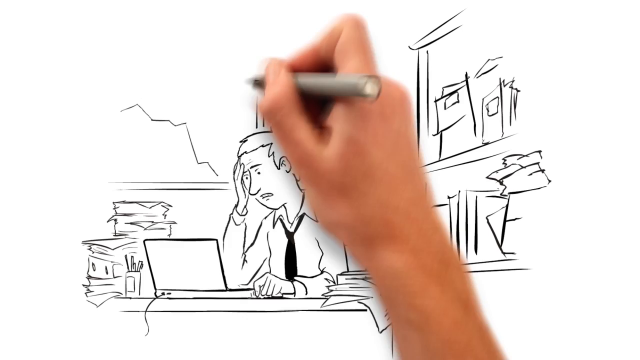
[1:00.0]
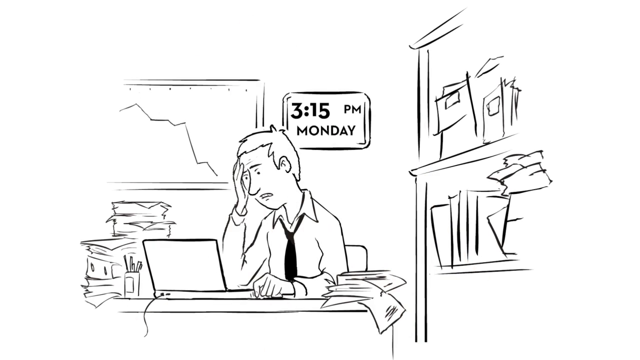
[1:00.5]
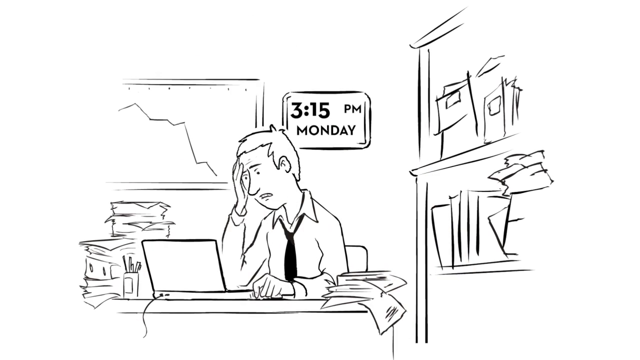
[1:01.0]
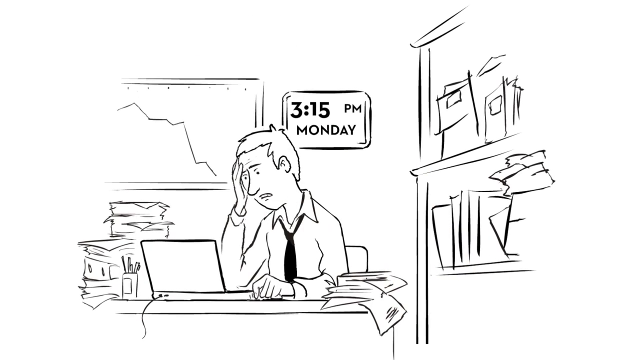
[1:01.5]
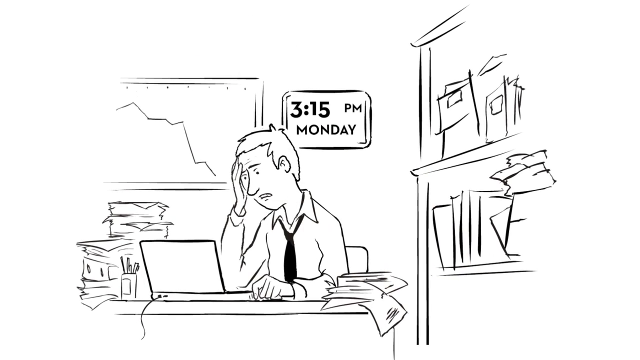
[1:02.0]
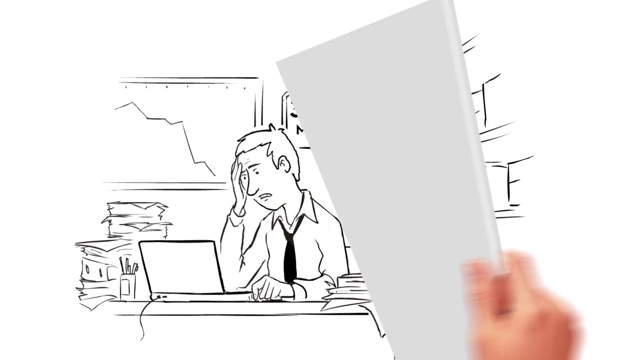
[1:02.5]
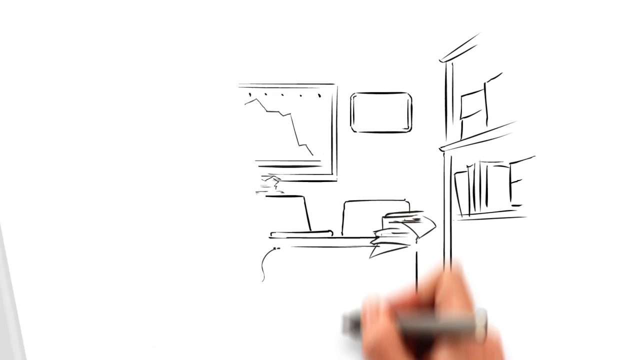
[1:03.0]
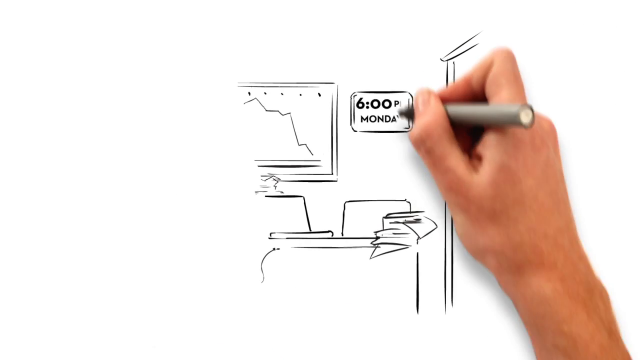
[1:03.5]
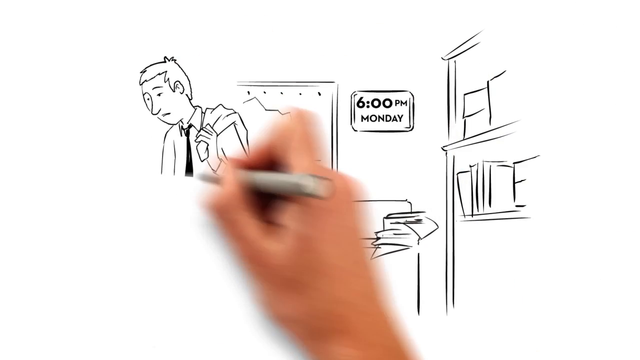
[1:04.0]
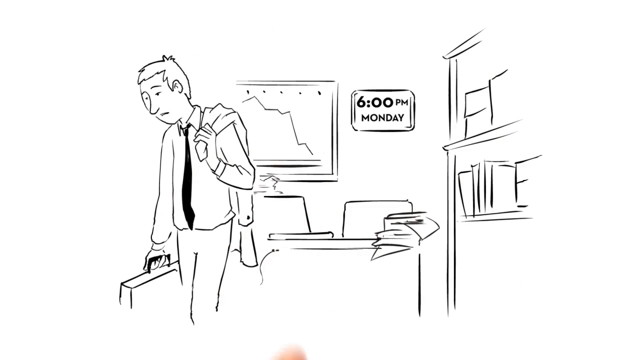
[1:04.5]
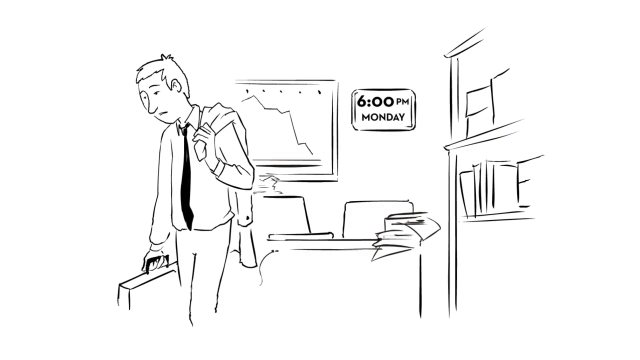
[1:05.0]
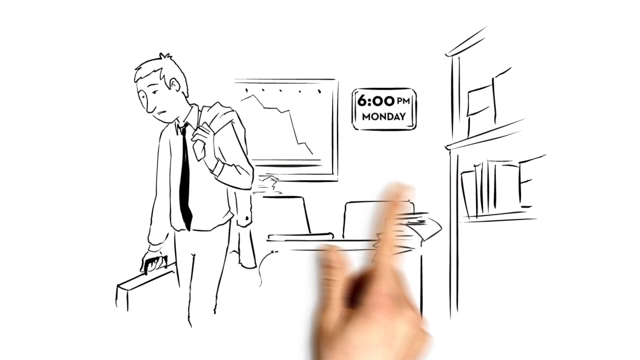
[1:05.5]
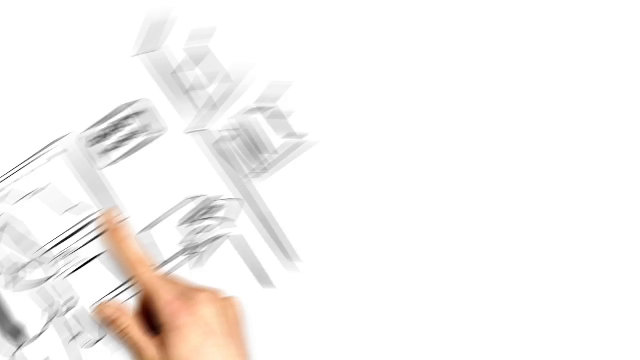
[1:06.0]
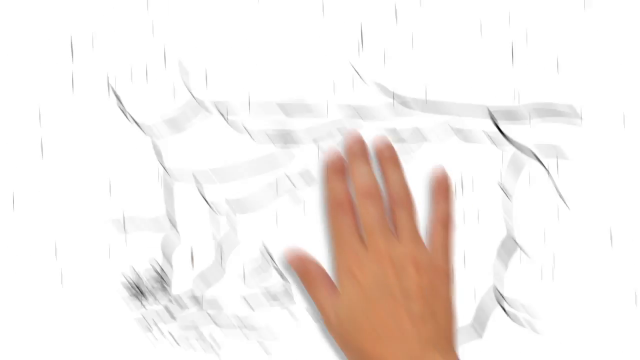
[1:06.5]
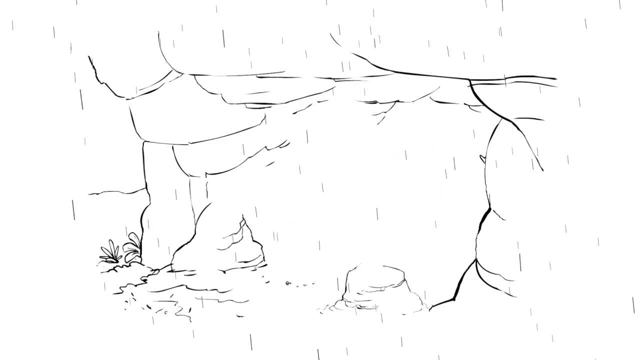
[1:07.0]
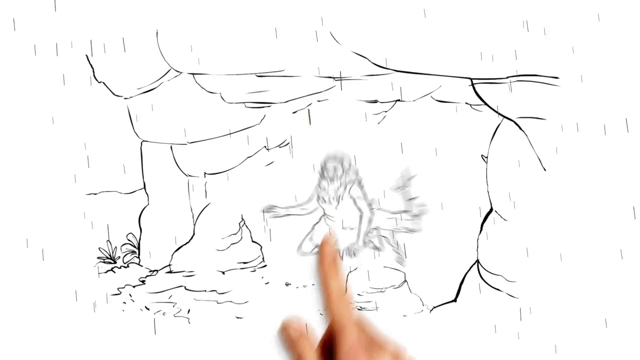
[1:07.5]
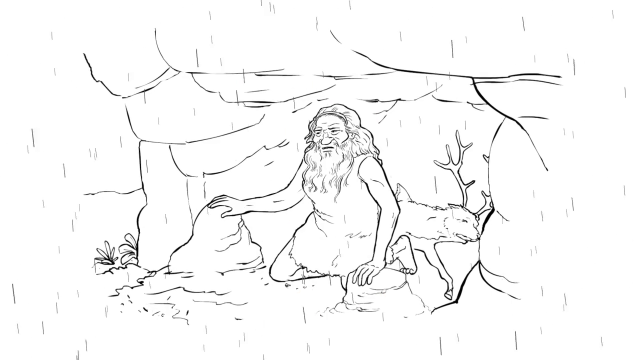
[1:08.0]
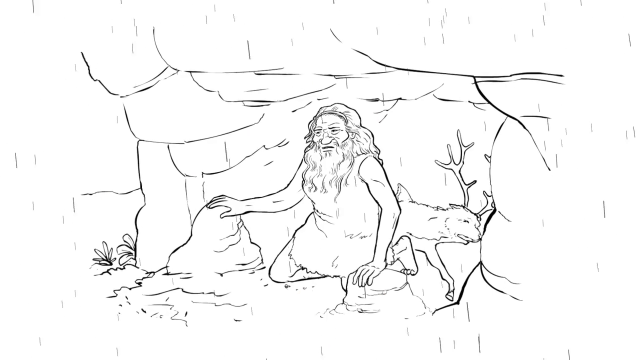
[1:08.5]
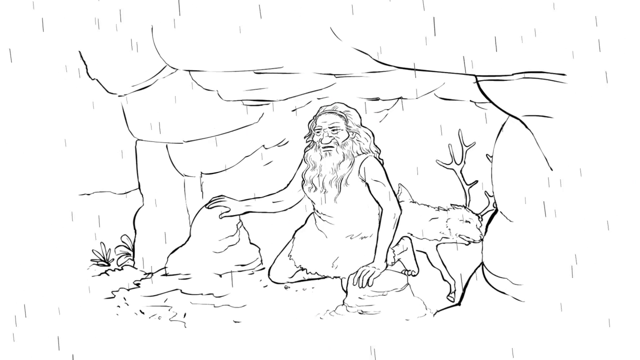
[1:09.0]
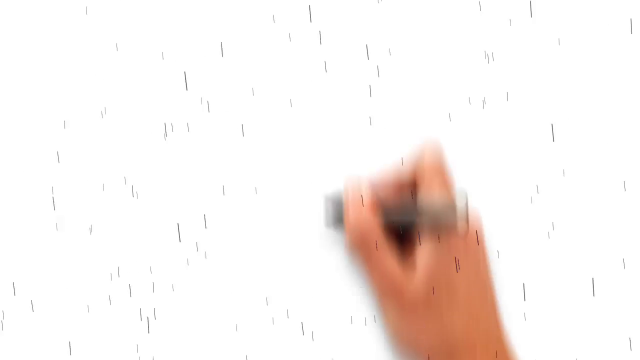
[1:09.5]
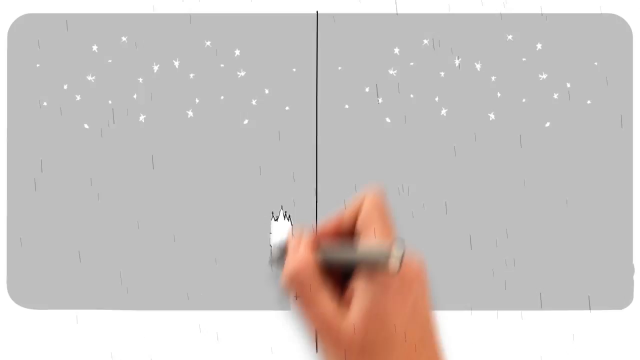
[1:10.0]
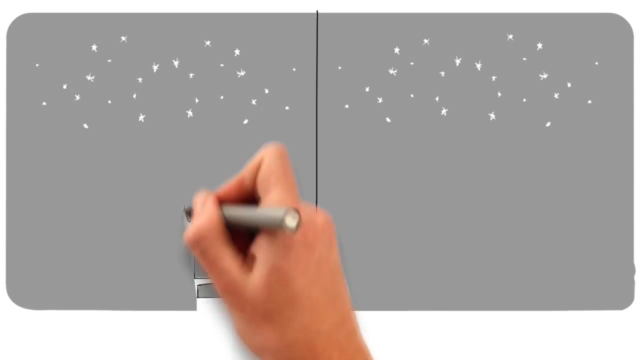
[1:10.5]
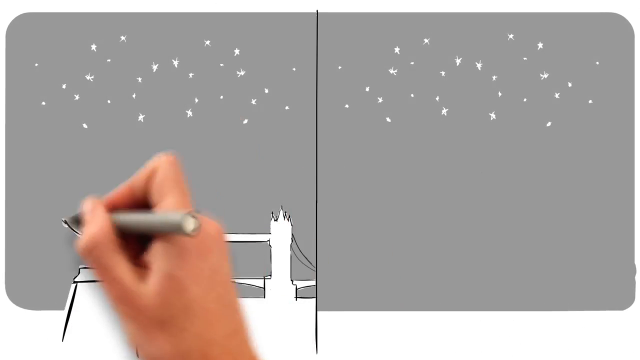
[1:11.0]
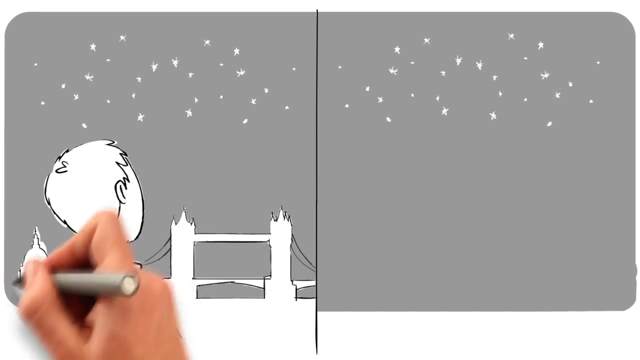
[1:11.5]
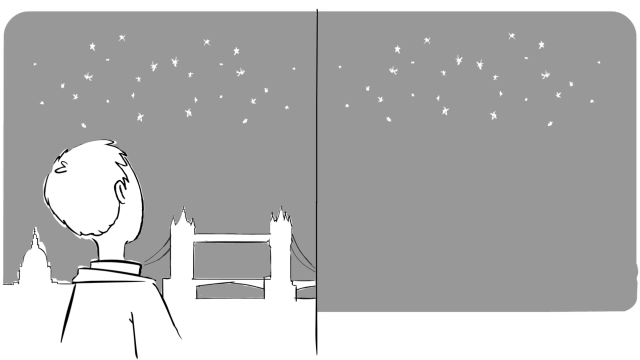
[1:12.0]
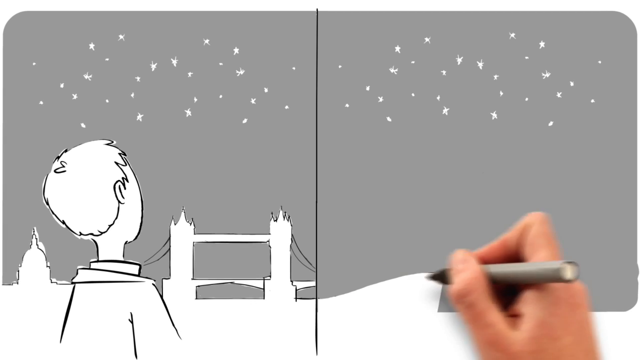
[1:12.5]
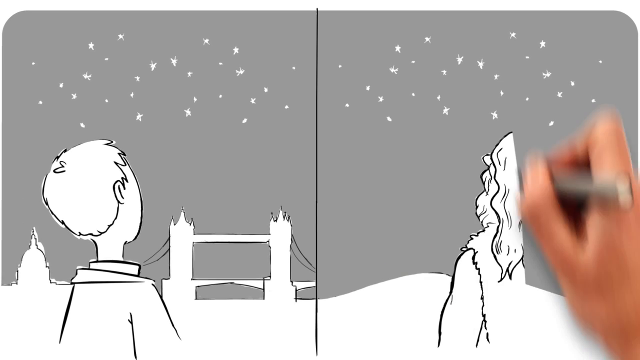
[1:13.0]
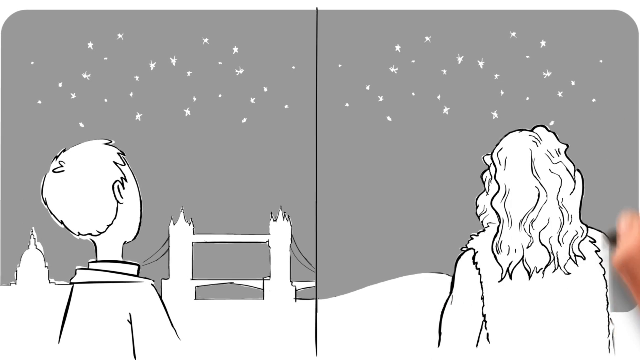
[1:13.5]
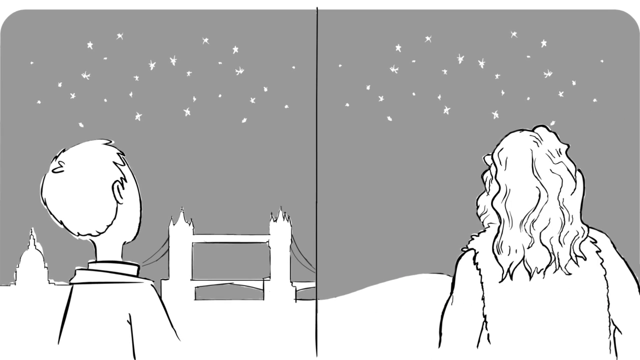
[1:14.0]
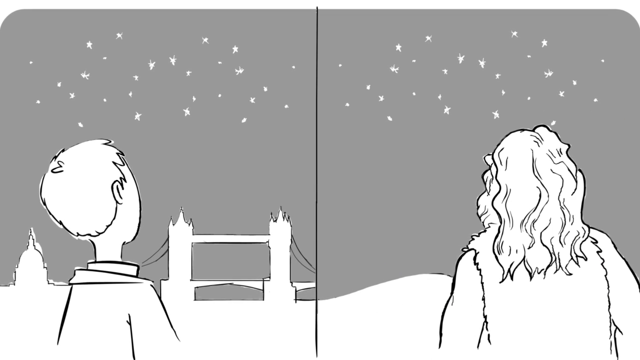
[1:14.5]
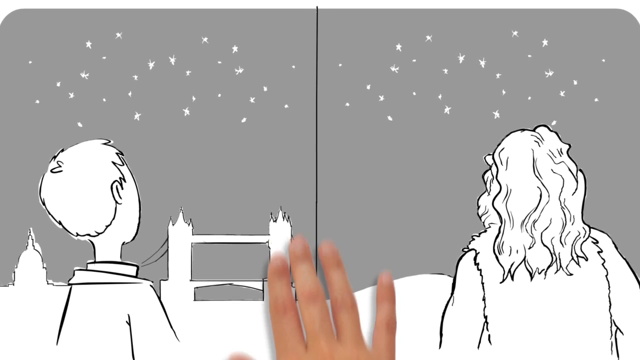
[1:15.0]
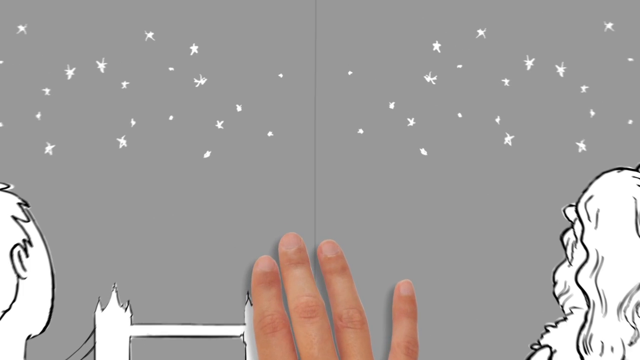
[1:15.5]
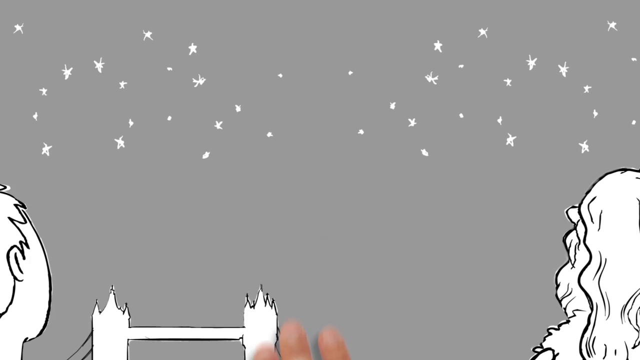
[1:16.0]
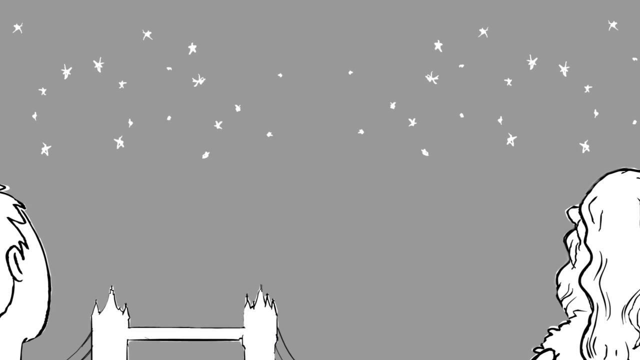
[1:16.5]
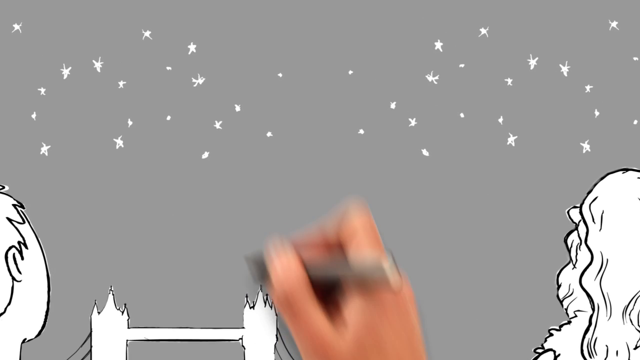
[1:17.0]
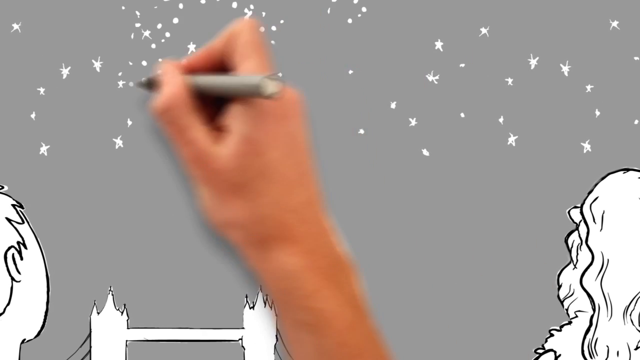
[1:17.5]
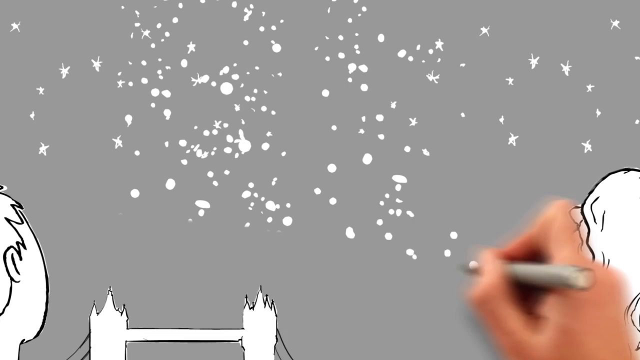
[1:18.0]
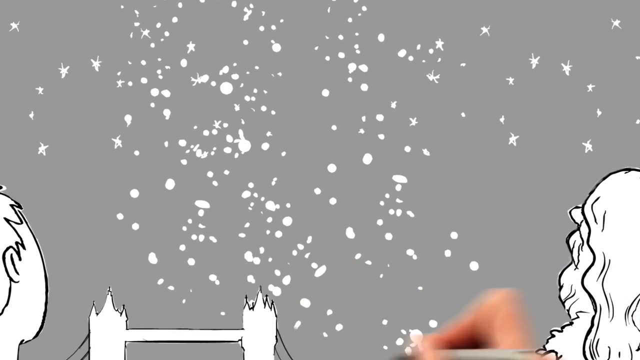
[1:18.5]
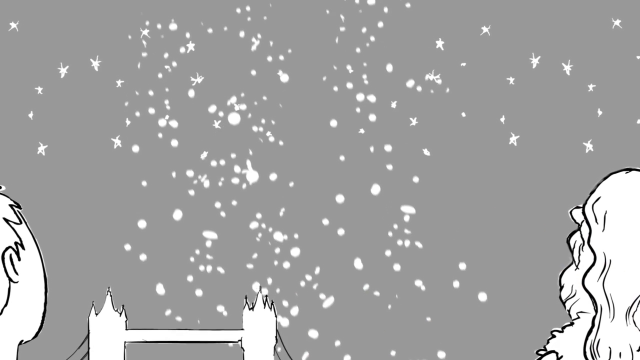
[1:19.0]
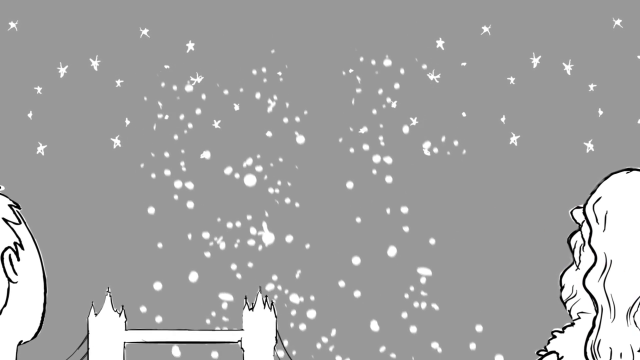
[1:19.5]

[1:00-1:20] The modern man character appears to be sitting at a desk with his head in his hands, wearing a shirt and tie, looking down at a computer and looking stressed. A clock on the office wall reads "3.15 p.m. Monday." Next, the same man is in the office standing up rather than at his desk, leaving for the day with a briefcase in one hand and his coat slung over his shoulder, looking down and depressed, while the clock on the wall reads "6 p.m. Monday." The caveman character then seems to be in a cave, with the elk he killed behind him; it appears to be raining on the cave, and he takes shelter in its opening. A split screen shows the modern man on the left and the caveman on the right, both looking up at the sky at what looks like the same stars, the same constellations, and more stars appear to be drawn.